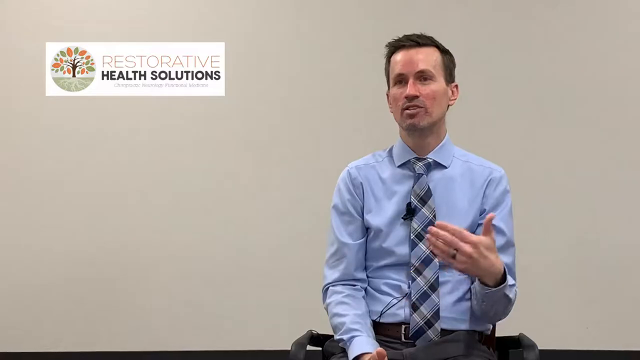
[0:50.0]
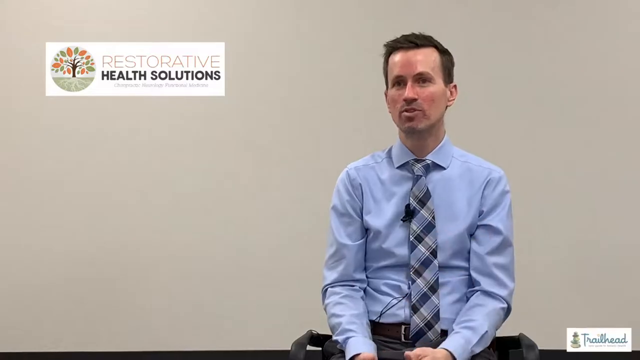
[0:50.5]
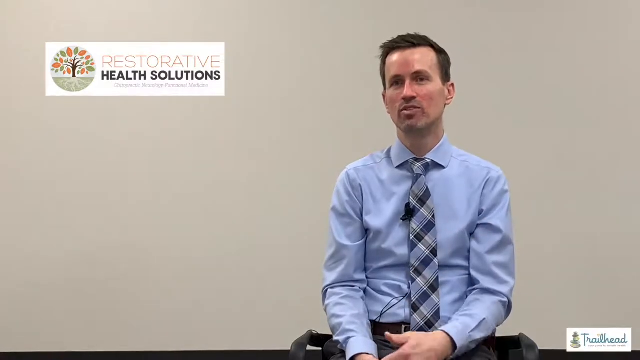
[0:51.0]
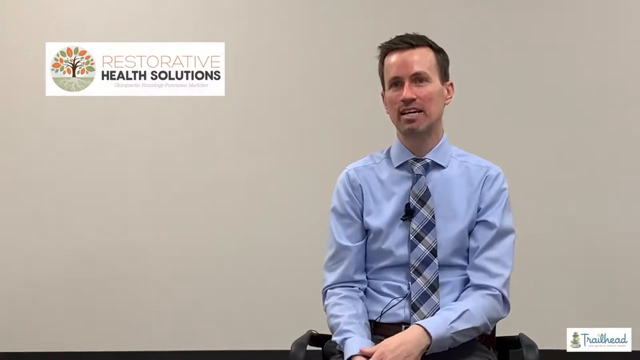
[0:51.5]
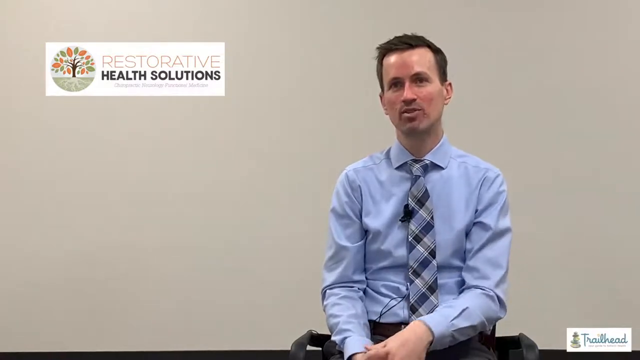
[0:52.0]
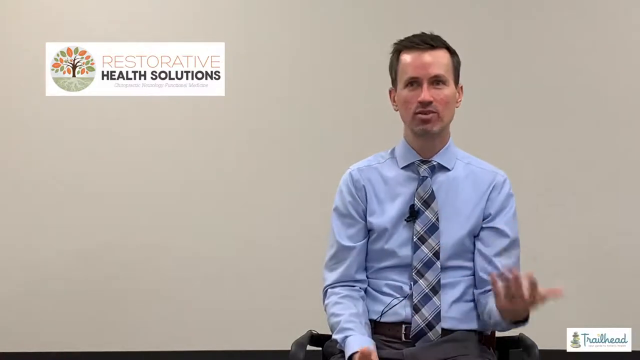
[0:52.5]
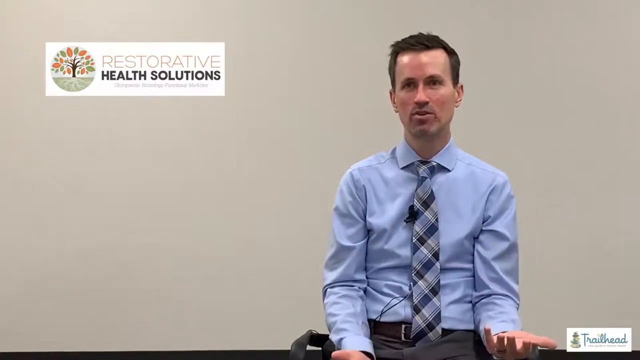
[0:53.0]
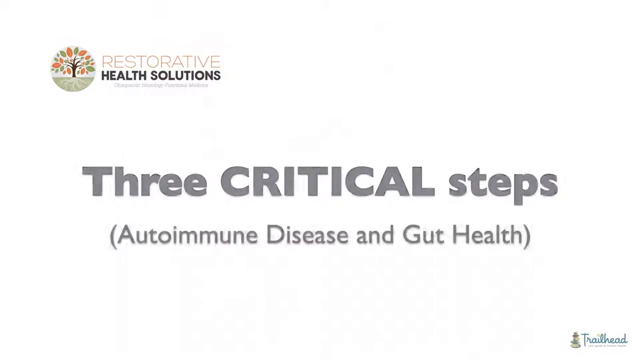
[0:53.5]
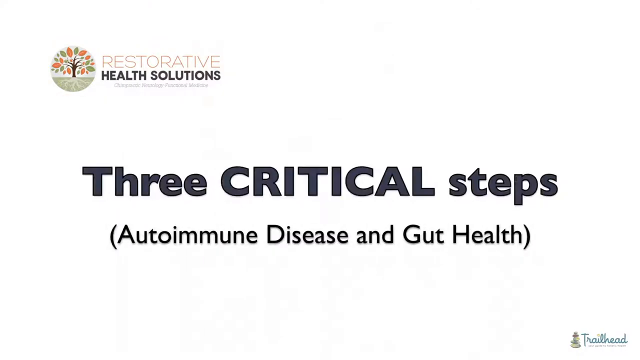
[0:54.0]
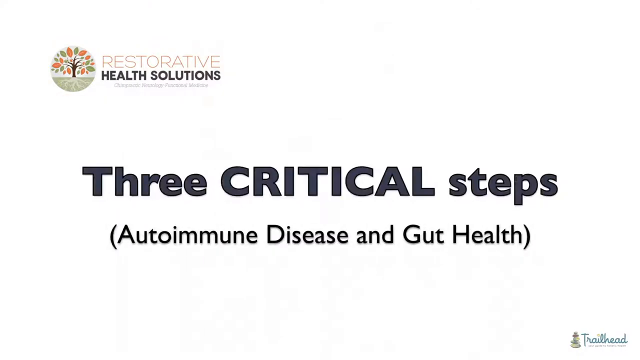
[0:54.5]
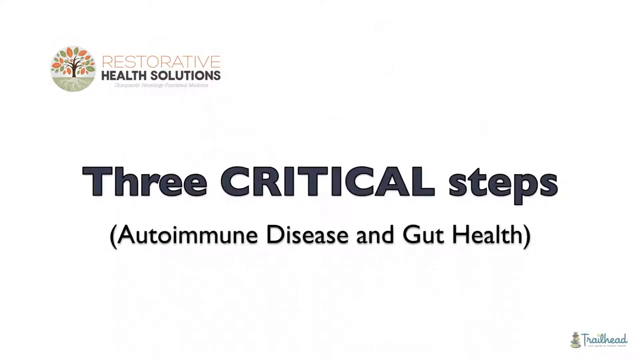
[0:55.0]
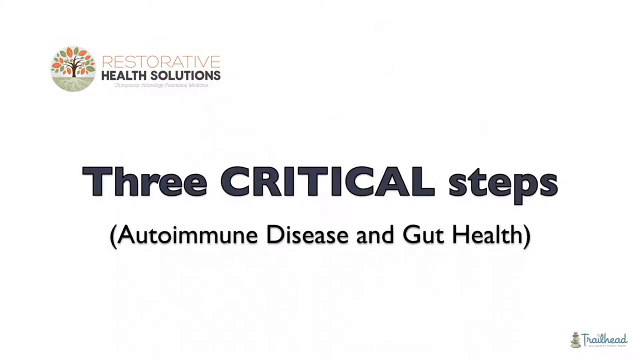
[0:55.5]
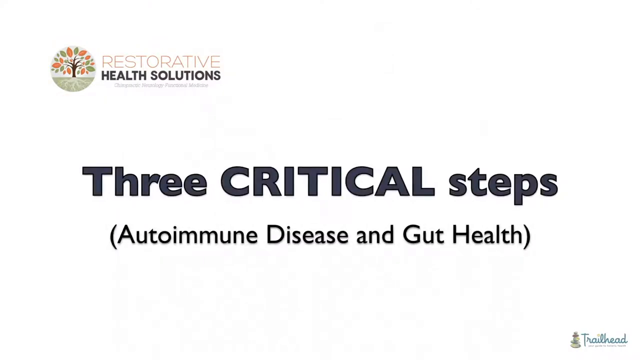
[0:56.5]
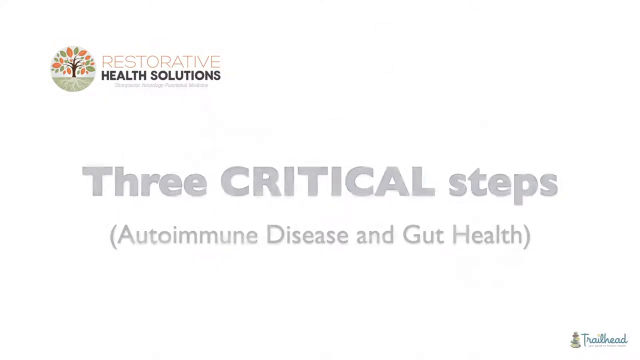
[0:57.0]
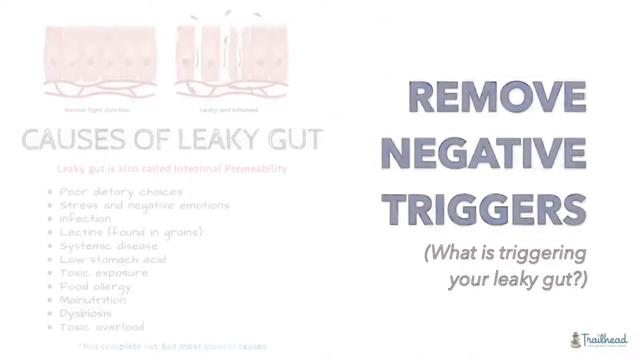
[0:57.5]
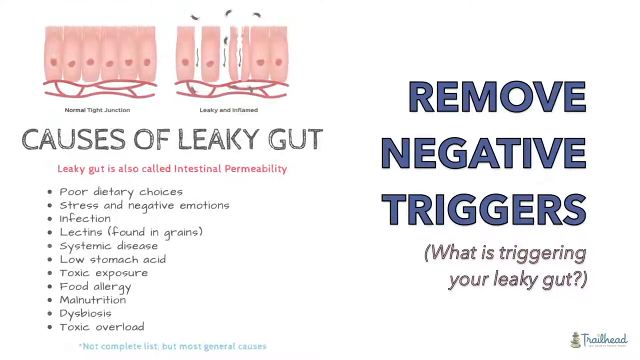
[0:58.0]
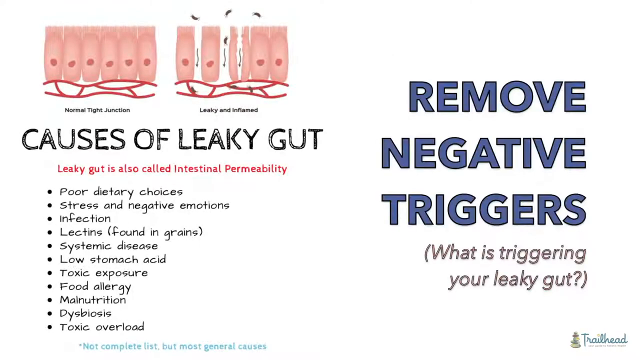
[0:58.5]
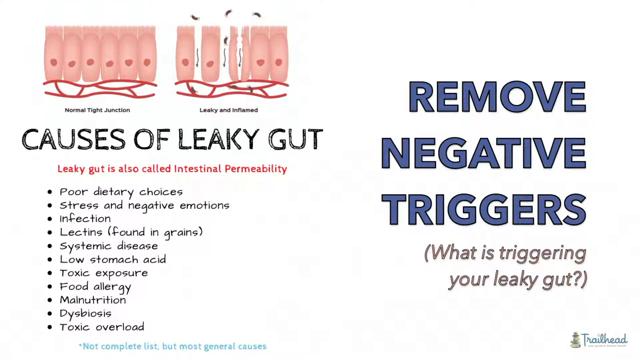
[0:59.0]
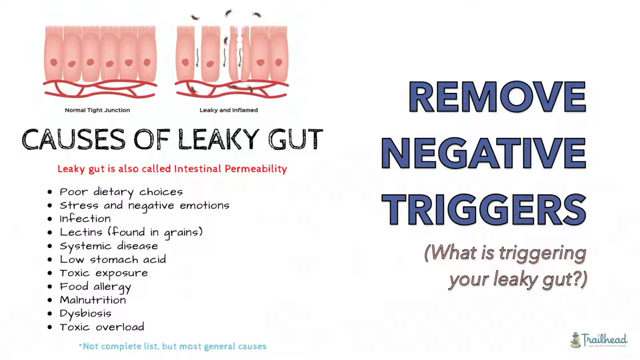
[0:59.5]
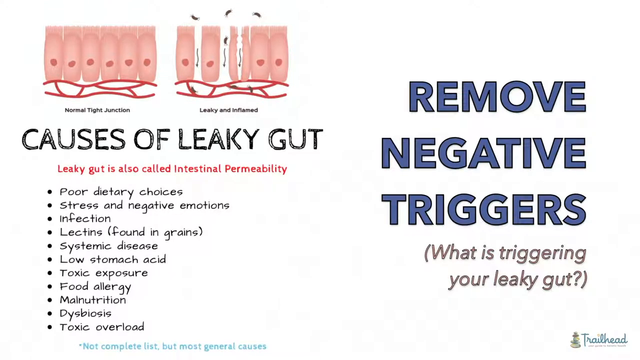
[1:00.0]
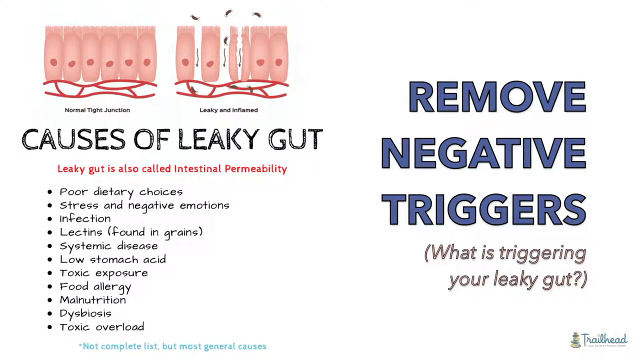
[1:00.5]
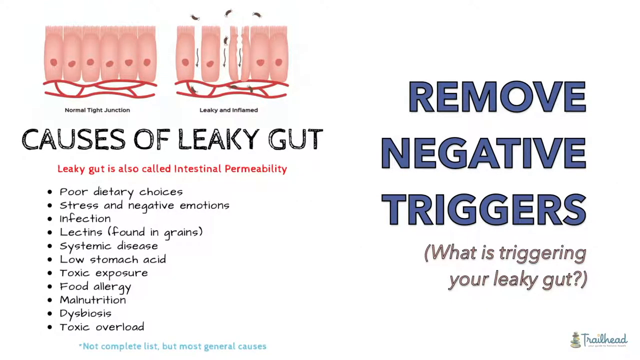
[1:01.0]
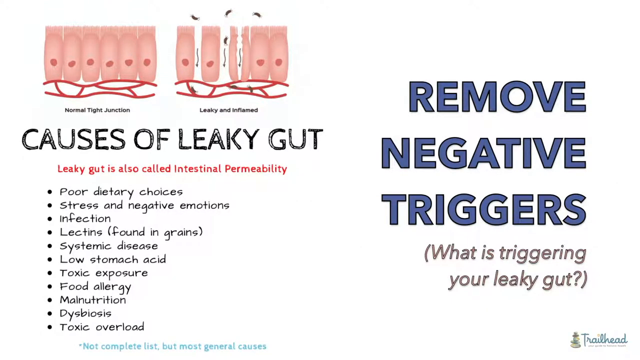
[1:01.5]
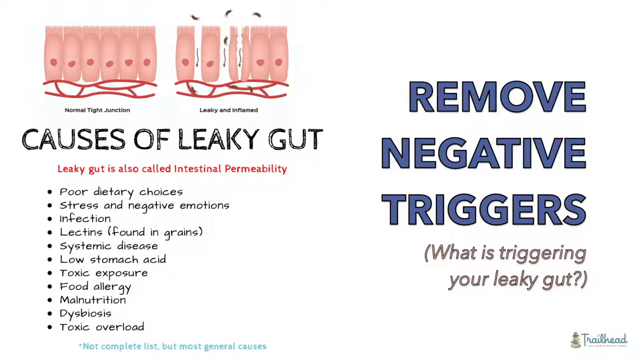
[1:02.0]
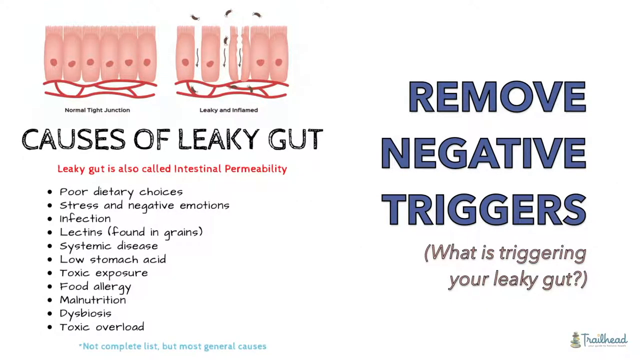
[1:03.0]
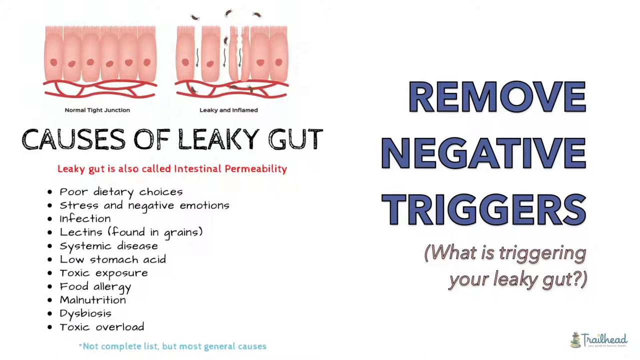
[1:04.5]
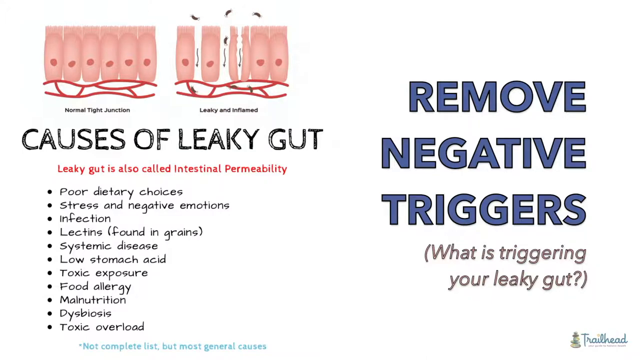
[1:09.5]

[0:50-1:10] The man, who uses hand motions as he talks, continues to speak. The PowerPoint slide then switches to two images on a light gray background. At the top is a diagram that appears to be about the normal tight junction, with another representation next to it about leaky and inflamed. Below, the slide lists causes of leaky gut, including poor dietary choices, stress and different kinds of negative emotions, infection, low stomach acid, toxic food exposure, food allergies and malnutrition. Beneath that, light blue text says "not complete list, but the most generalized causes of." On the right, the slide covers removing negative triggers and what is triggering the leaky gut.